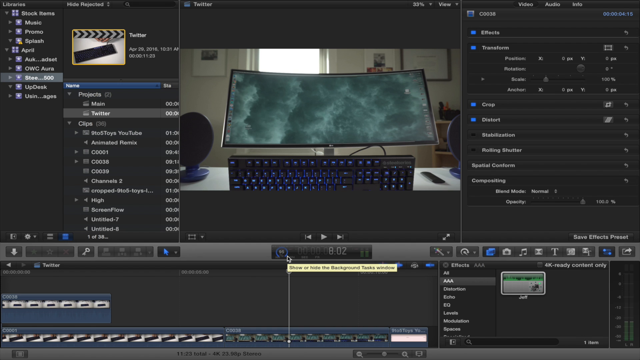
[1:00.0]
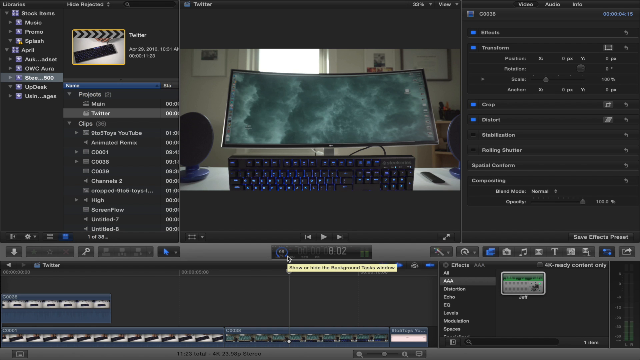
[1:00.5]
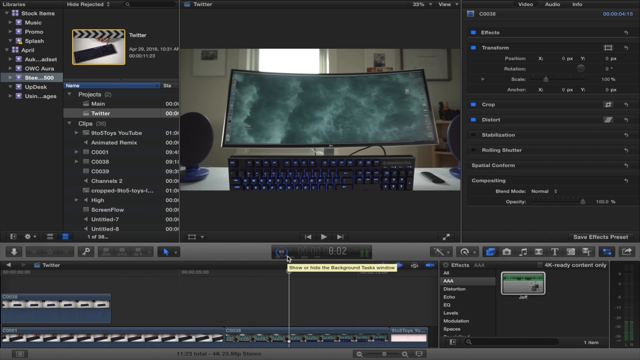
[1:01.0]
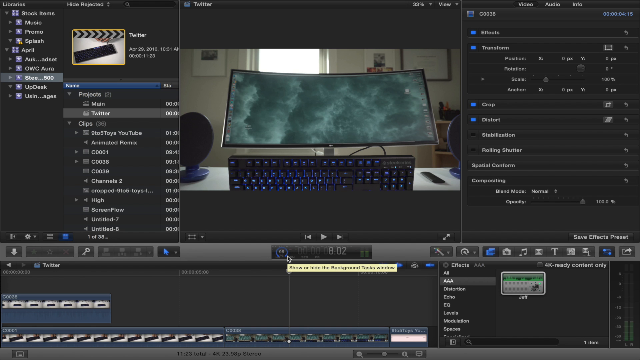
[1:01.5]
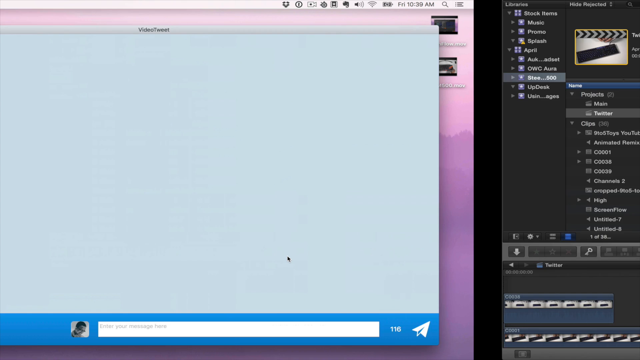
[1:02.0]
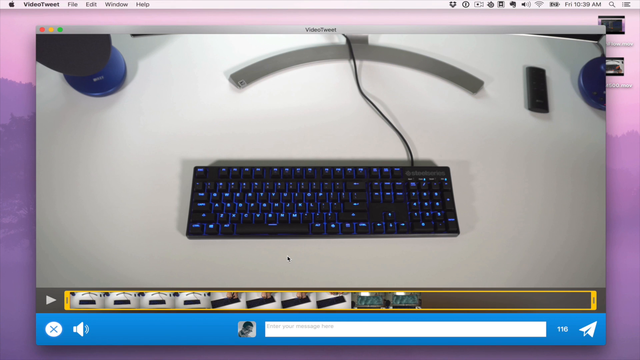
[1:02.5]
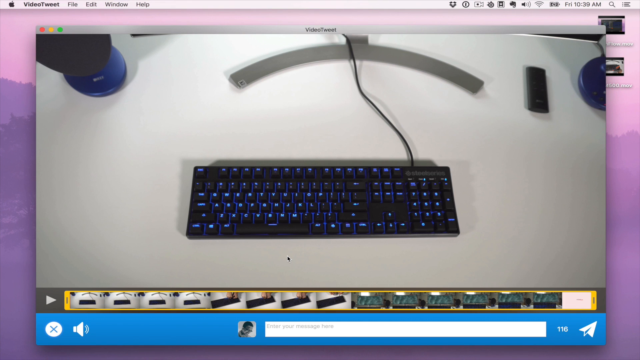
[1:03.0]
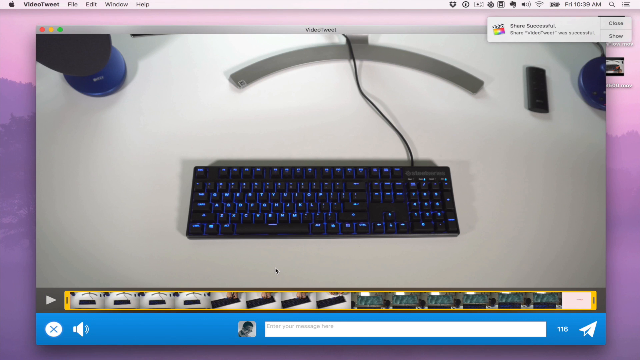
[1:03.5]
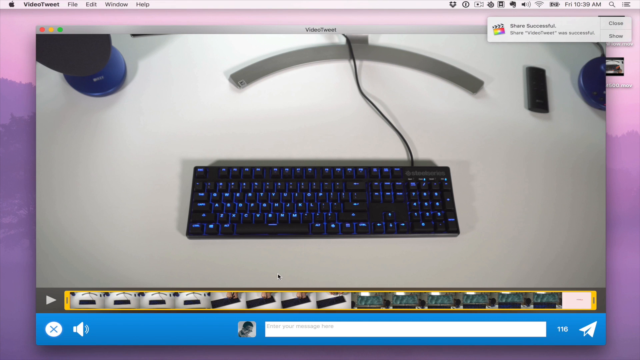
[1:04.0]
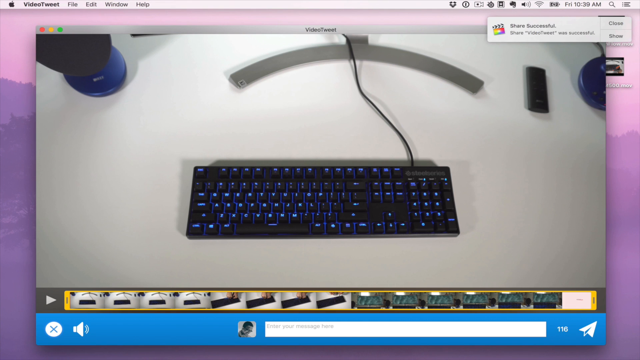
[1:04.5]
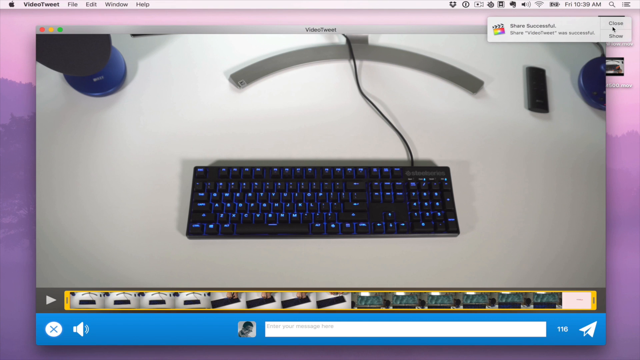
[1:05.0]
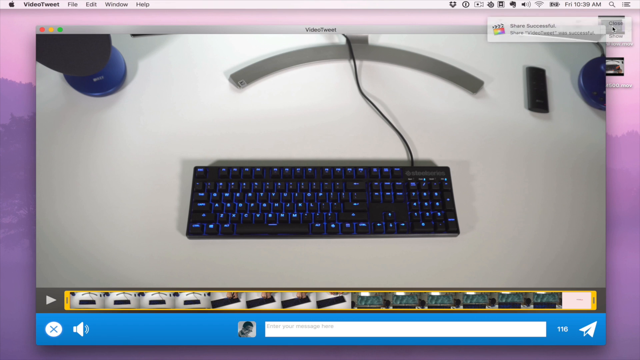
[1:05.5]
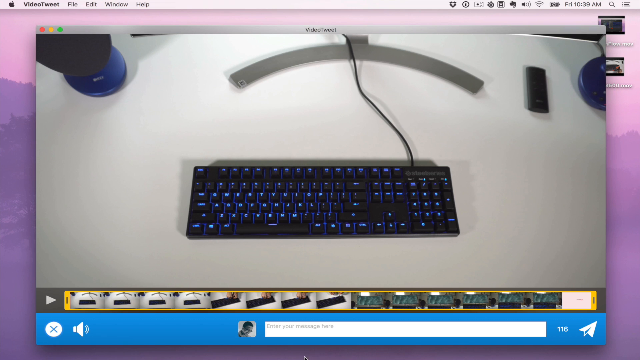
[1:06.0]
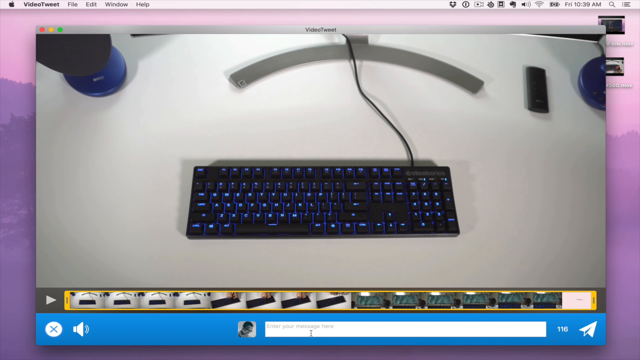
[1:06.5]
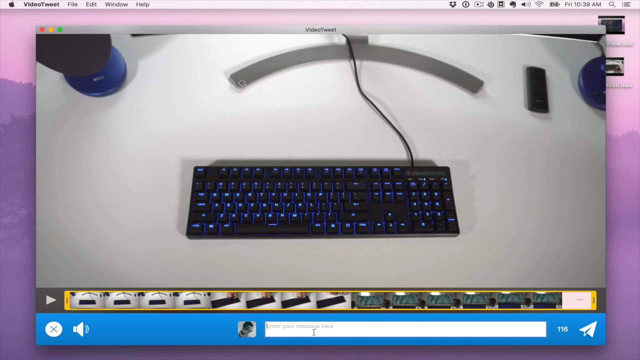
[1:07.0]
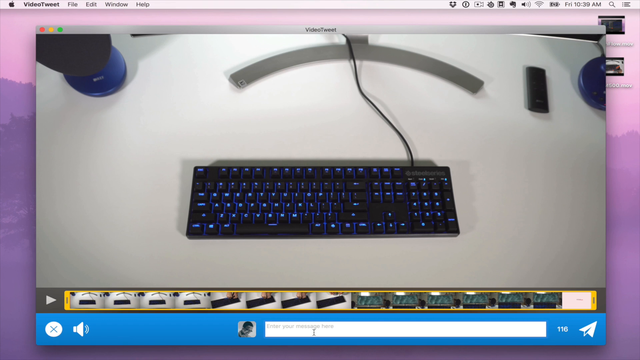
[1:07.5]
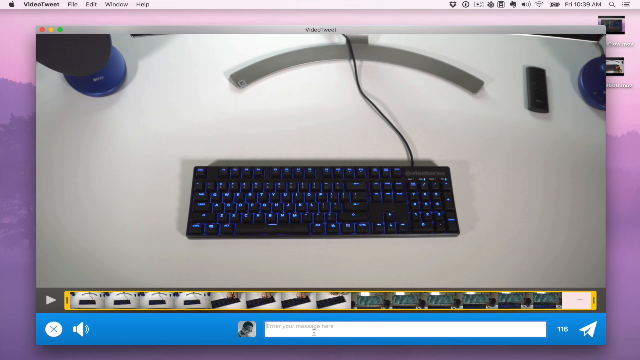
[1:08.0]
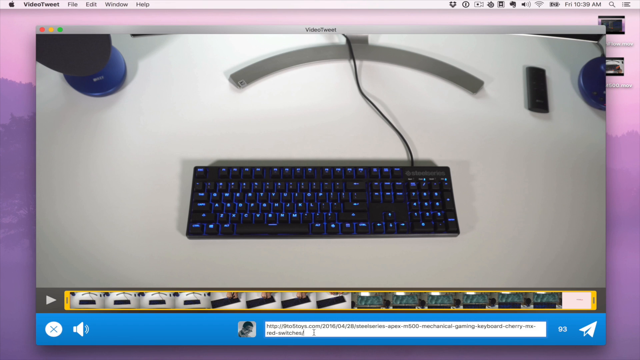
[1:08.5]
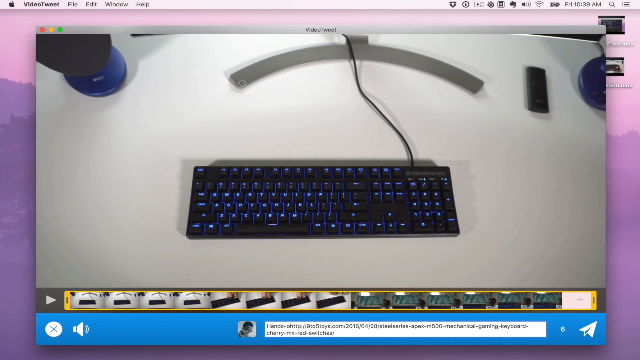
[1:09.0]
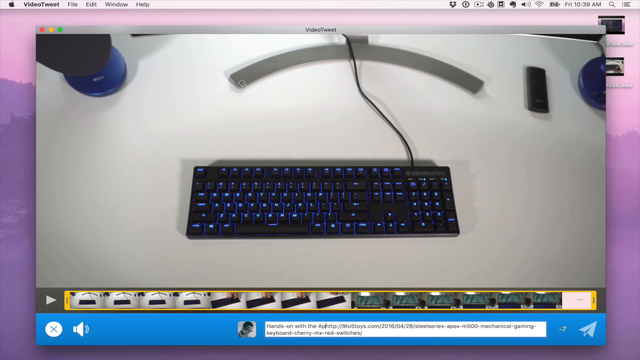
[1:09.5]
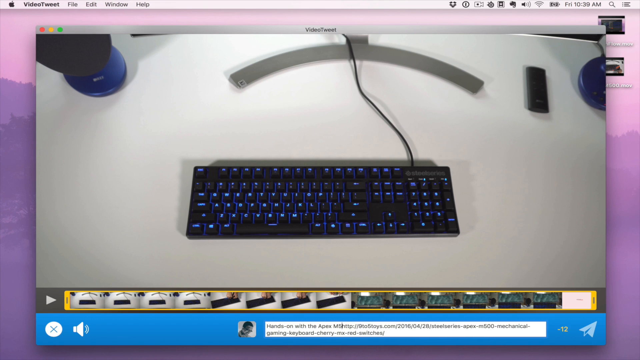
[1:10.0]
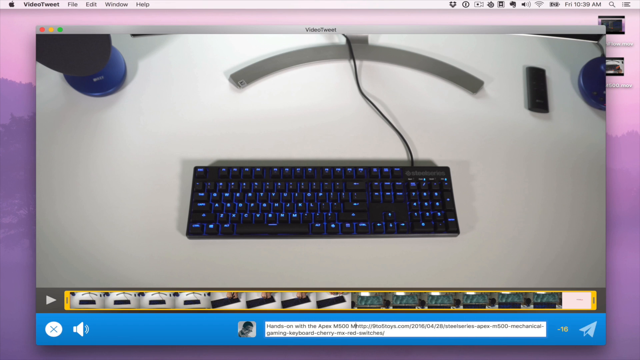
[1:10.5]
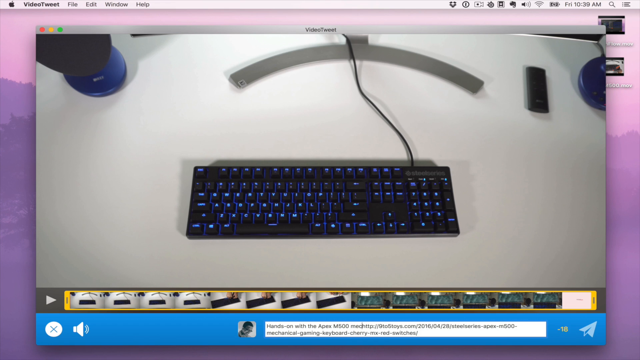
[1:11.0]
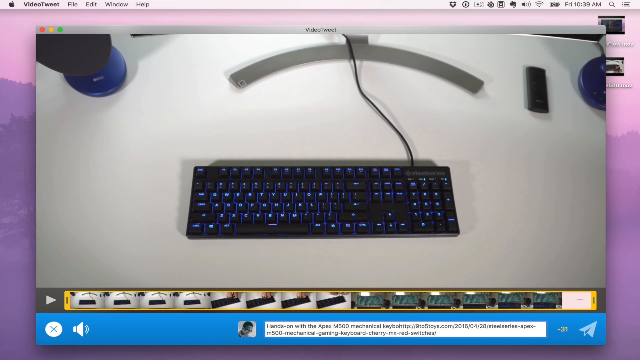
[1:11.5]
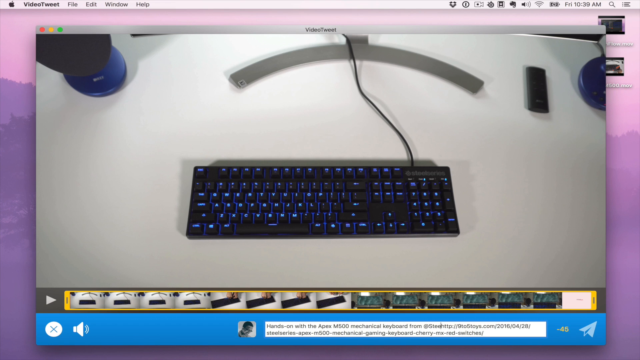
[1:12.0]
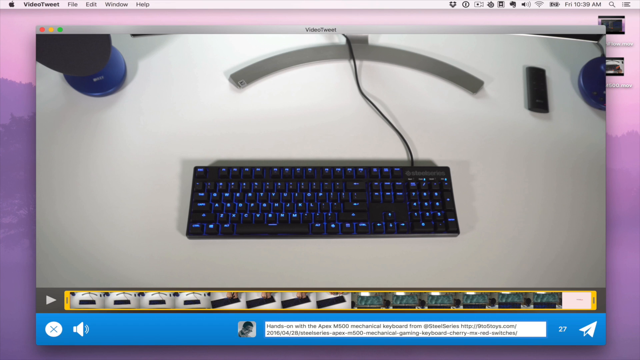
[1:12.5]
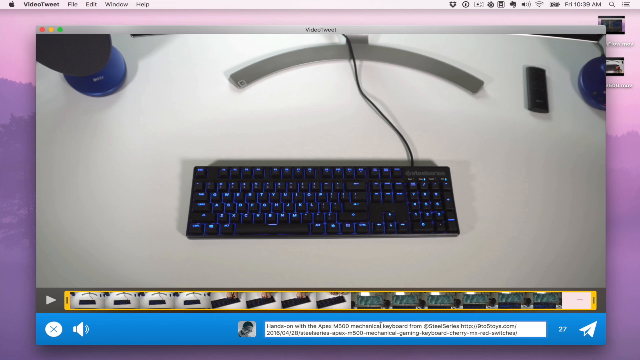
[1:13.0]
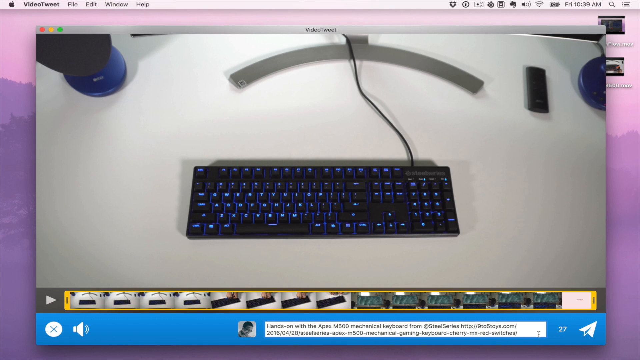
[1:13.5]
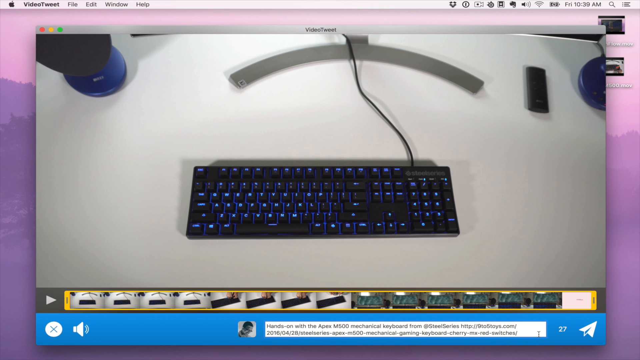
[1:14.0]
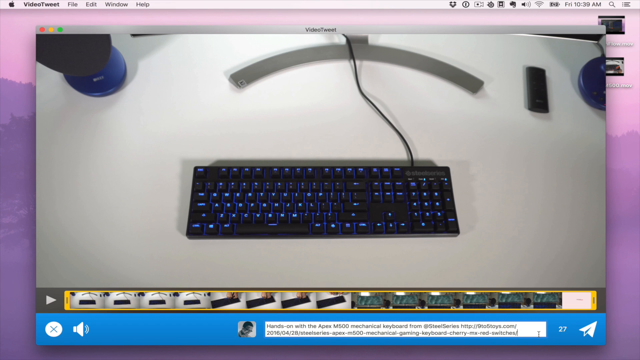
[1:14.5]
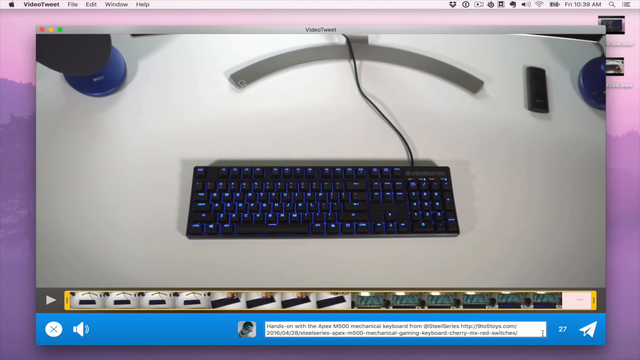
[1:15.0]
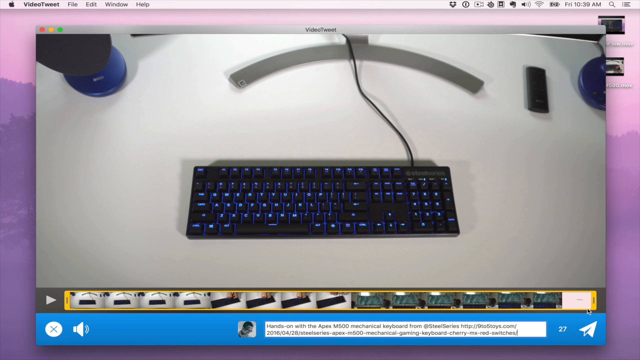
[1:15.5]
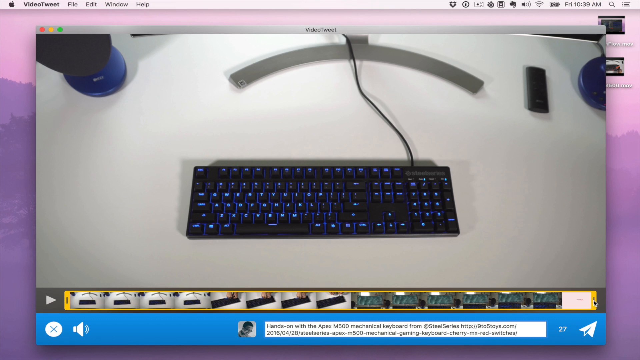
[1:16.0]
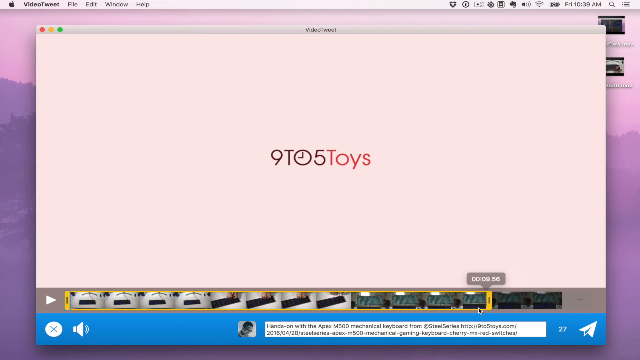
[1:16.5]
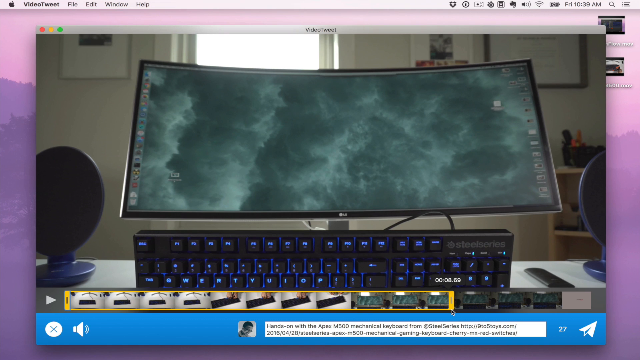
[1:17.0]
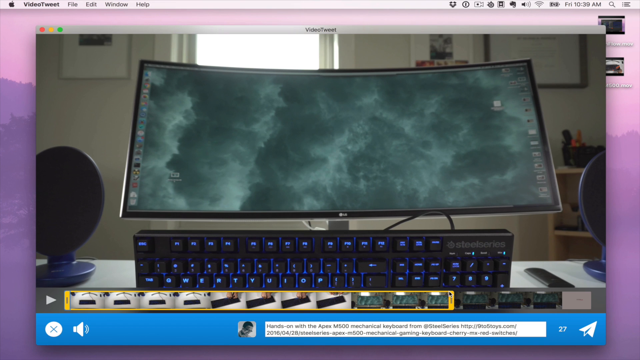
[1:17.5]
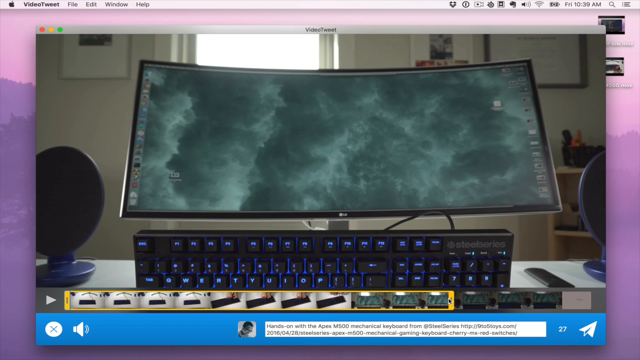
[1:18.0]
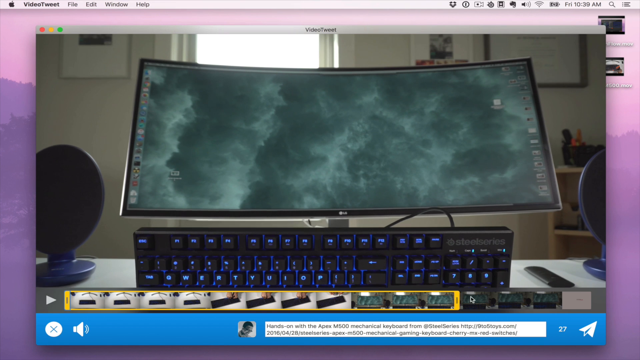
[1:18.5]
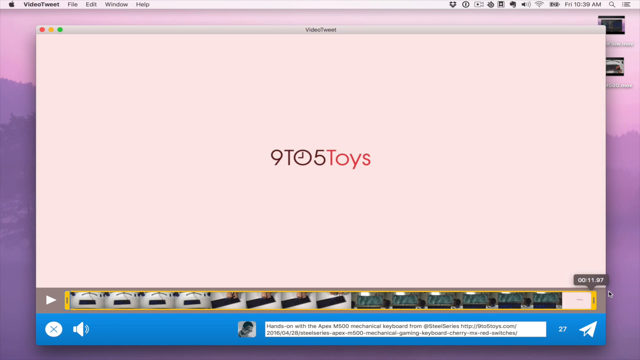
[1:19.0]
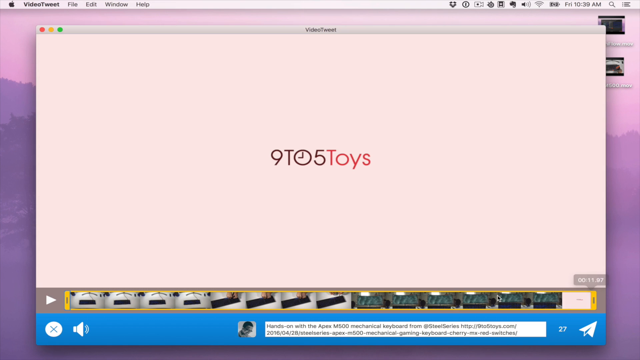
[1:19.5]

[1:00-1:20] The entire display moves off the screen to the right, and the light pink desktop with trees and a forest moves in from the left. A piece of software is now open on it: a rectangle with "VideoTweet" written along the top and red, yellow and green circular close, minimize and maximize icons. Toward the bottom is a horizontal timeline bar with a yellow frame and a play icon to the left, and beneath that a blue horizontal bar with a blue cross in a white circle and a white speaker volume symbol to its right. To the right of that is a small icon of somebody's face and a white box reading "enter your message here", then the number 116, and then the Twitter paper plane icon used to send a message. The main body of the box shows a picture of a keyboard from above. A notification moves in from the right in the top right as a horizontal grey box with a multicoloured clapper board symbol and the text "share successful" and "share video tweet was successful", with options to "close" or "show" to the right. The cursor selects "close", then moves down to the "enter your message here" box and clicks on it. The text cursor begins to flash in the box, and a link to a website ending in "Mechanical Gaming Keyboard Cherry" is immediately pasted in. Text types in front of it reading "hands-on with the Apex M500 mechanical keyboard from @Steelseries". The cursor moves to the end of the text and clicks, where it starts flashing; the number to the right has reduced to 27. The cursor moves up to the yellow video timeline area, clicks the far right of the yellow frame and drags it in, and the video preview above changes, coming to a halt on the shot of the monitor facing the viewer with a keyboard underneath, in front of a window in a home office. The yellow bar is then dragged out to the far right as far as it will go, and the preview shows a 9TO5Toys logo on a white background.